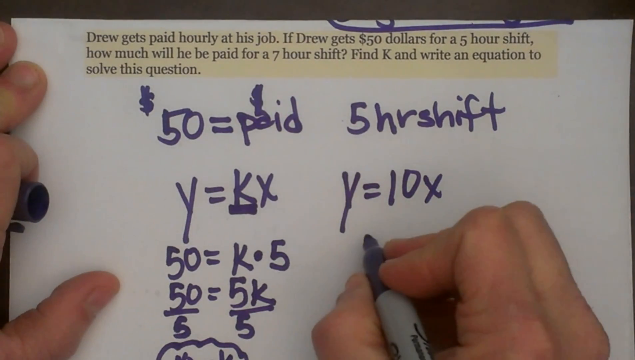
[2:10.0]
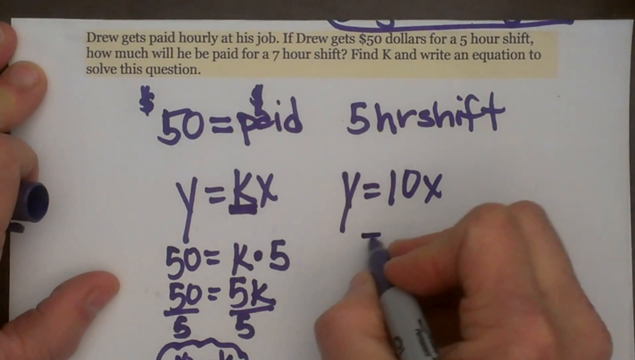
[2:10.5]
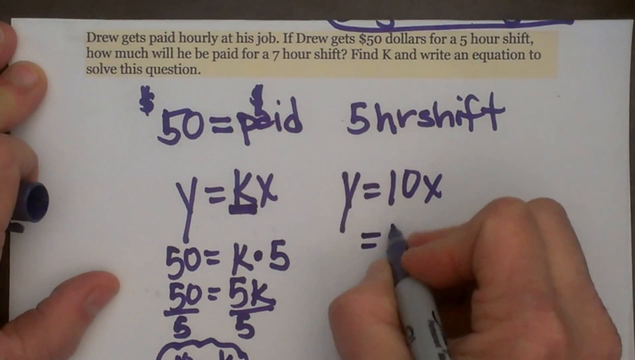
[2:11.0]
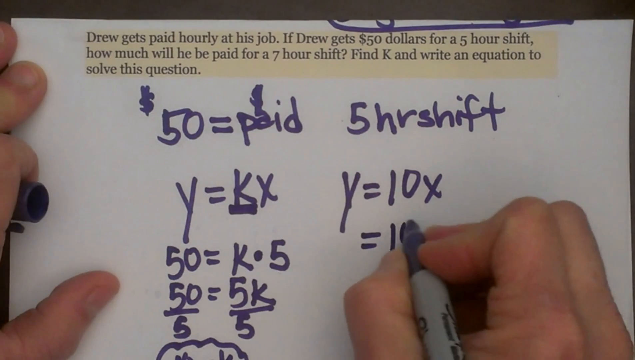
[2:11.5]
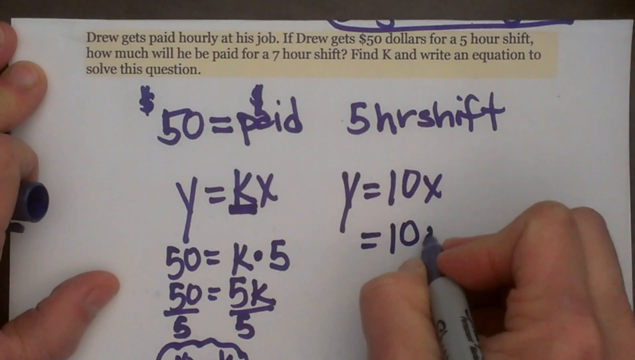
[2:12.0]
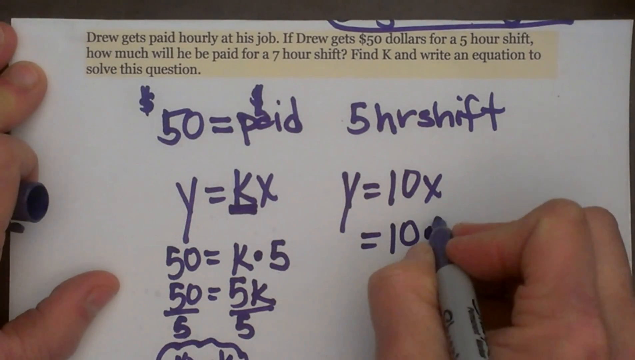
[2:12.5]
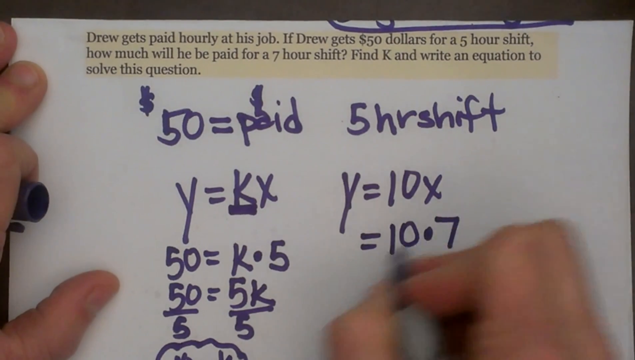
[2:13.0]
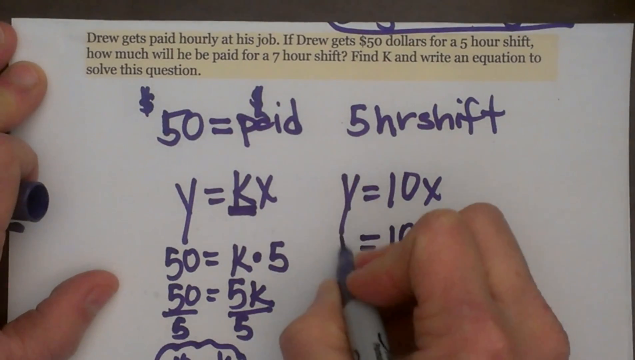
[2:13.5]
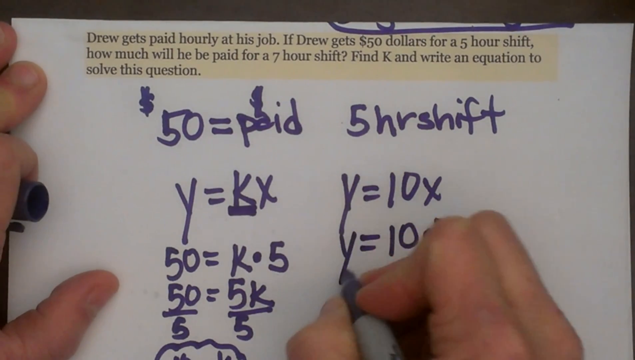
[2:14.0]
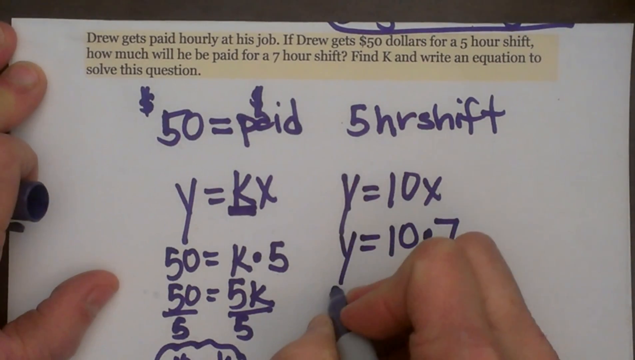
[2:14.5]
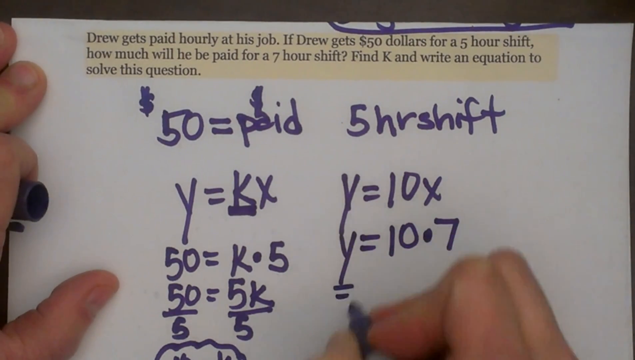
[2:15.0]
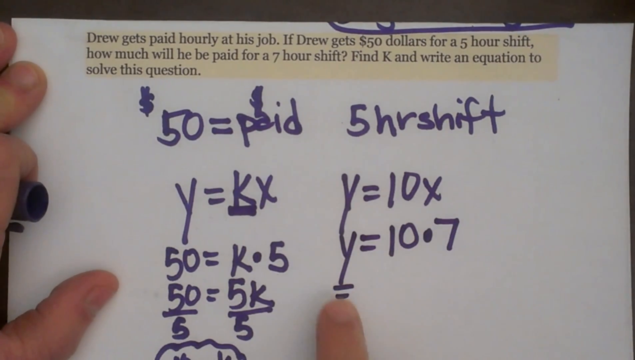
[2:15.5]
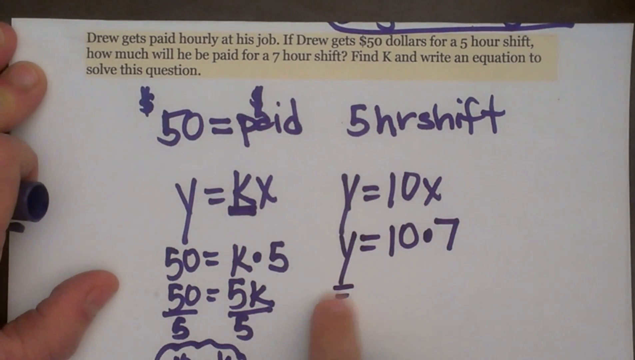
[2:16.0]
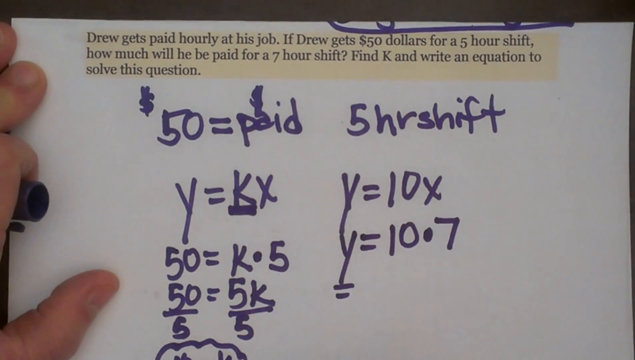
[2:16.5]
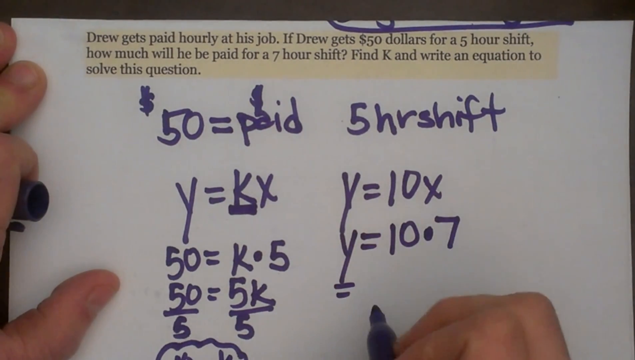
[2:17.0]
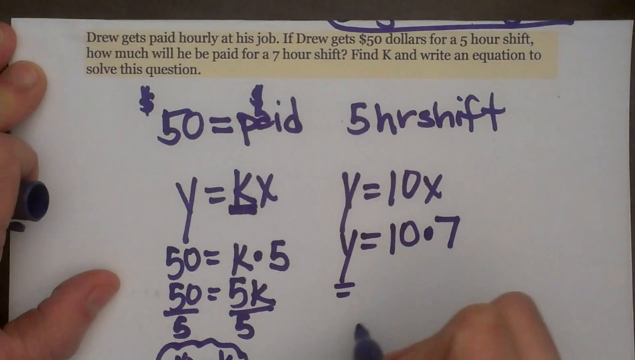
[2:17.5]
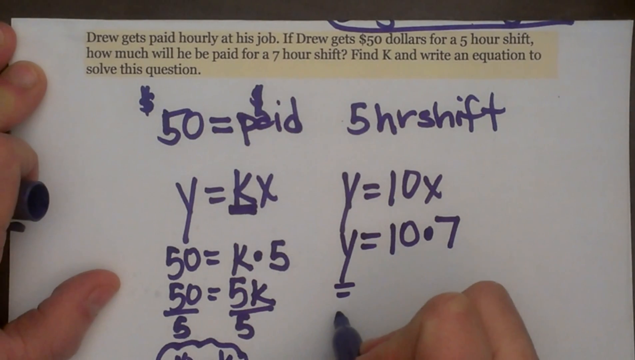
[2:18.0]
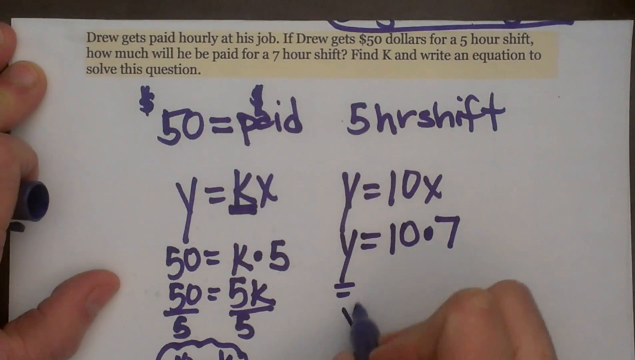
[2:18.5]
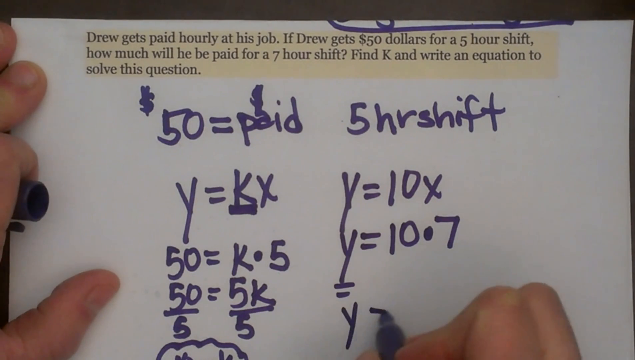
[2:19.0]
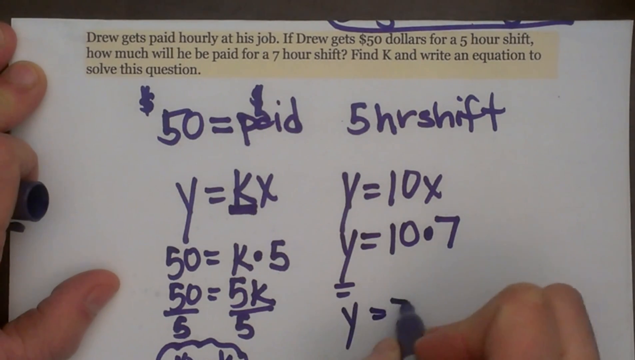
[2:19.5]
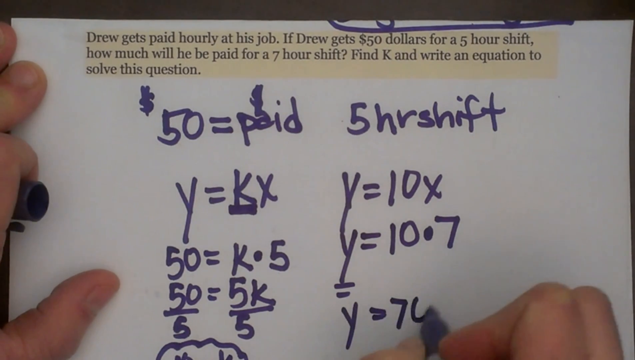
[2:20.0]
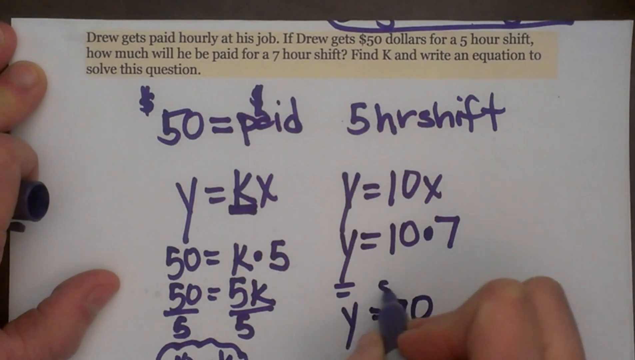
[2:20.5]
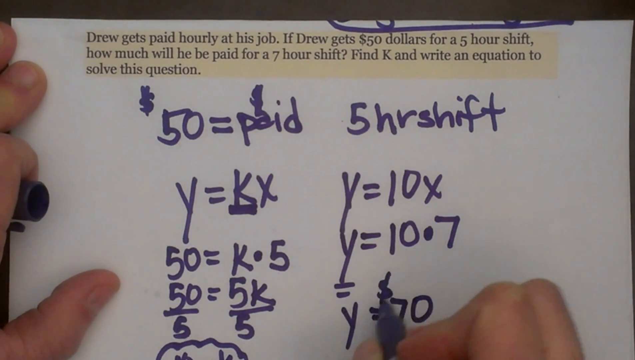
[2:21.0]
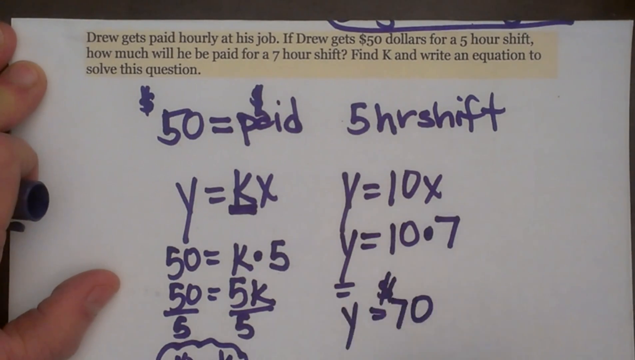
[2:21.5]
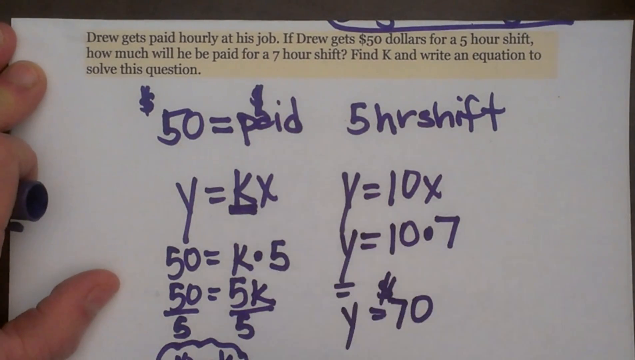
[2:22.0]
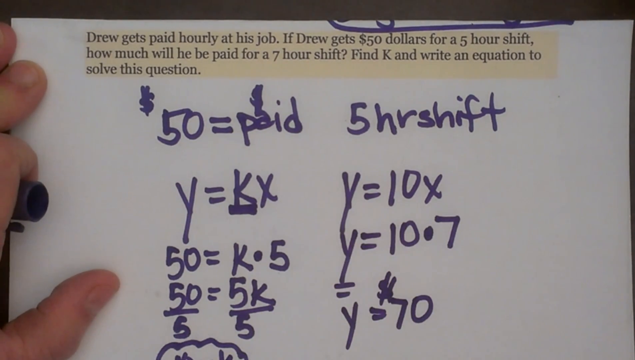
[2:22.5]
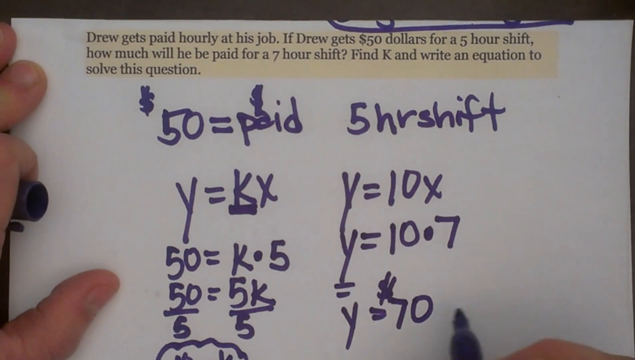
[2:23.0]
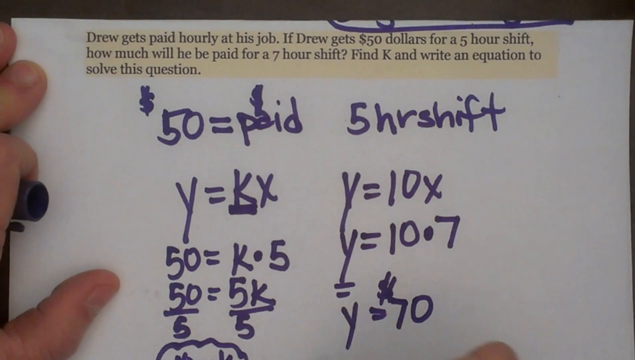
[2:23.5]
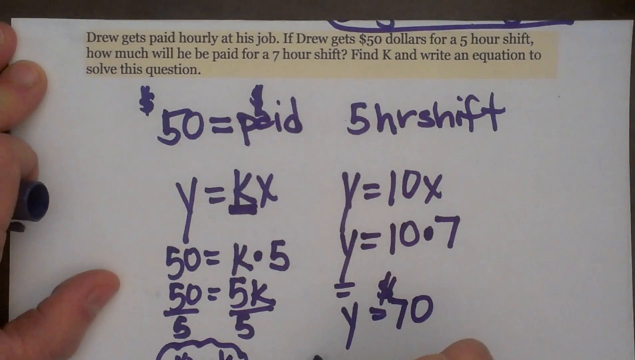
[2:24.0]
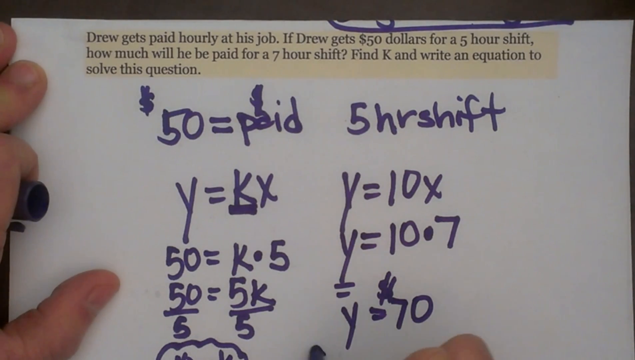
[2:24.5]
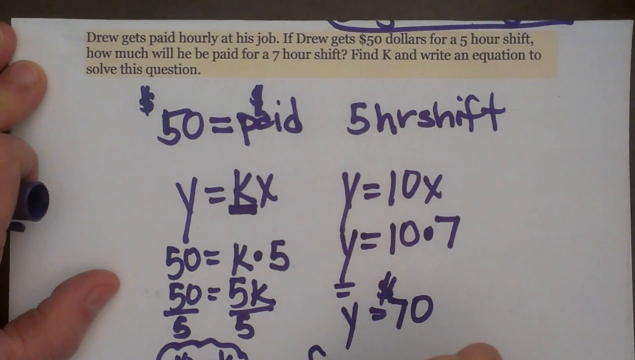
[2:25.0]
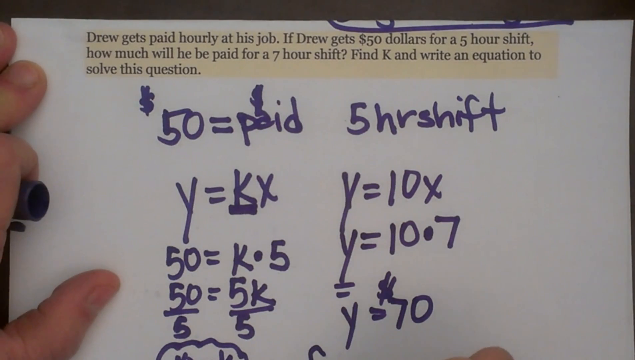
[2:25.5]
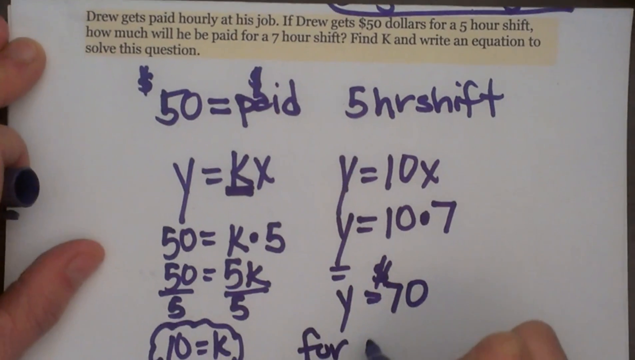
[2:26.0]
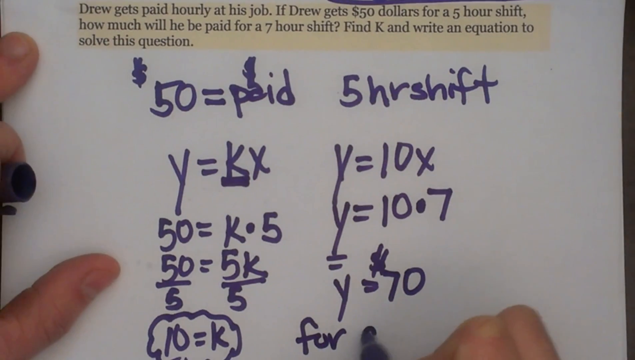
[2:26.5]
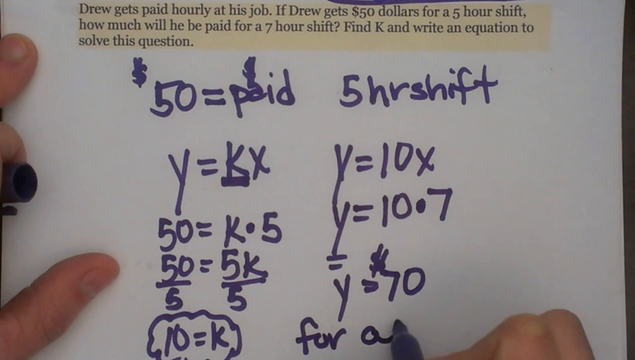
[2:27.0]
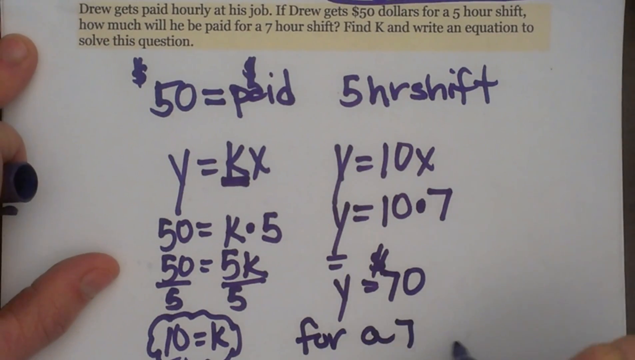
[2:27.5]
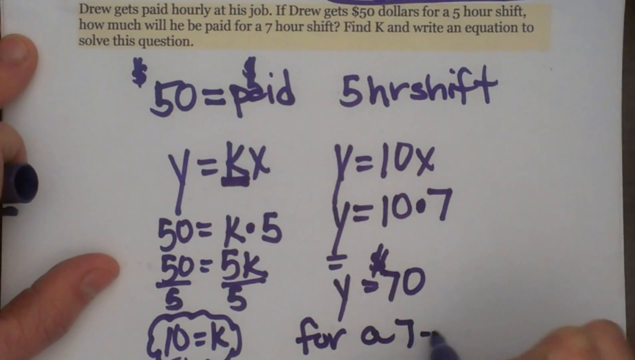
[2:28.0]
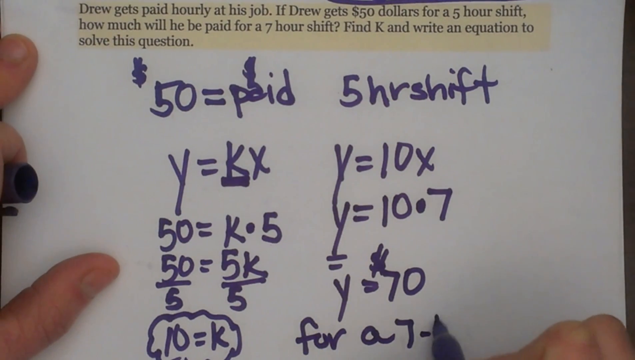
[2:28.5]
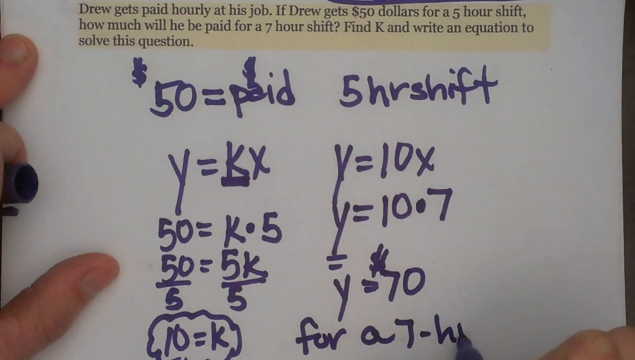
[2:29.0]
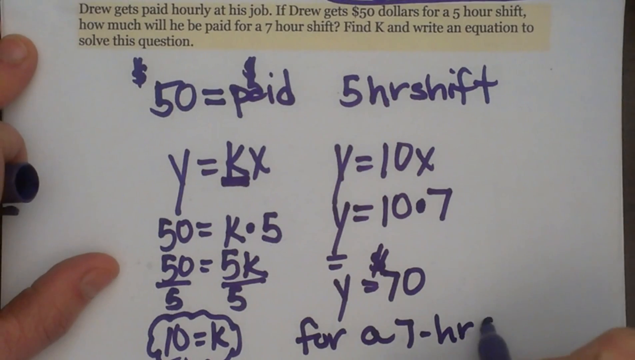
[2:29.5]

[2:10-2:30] A person writes equations. Written are "50 = paid", "five-hour shift", "y = kx" with the k underlined, "50 = k.5", "50/5 = 5k/5" and "10 = k", with a cloud-like, jagged-edged circle around it. Under "five-hour shift" are "y = 10x" and "y = 10.7". The person puts an equal sign over the "y = $70". The writing reads "for 7_hr shift", and then the writing stops. The paragraph at the top of the screen is visible and entirely highlighted in yellow; it reads "Drew gets paid hourly at this job. If drew get $50.00 for a five hour shift, how much will he be paid for a 7 hour shift. Please find K and write an equation to solve this question." The person continues to hold the paper down with the left hand.